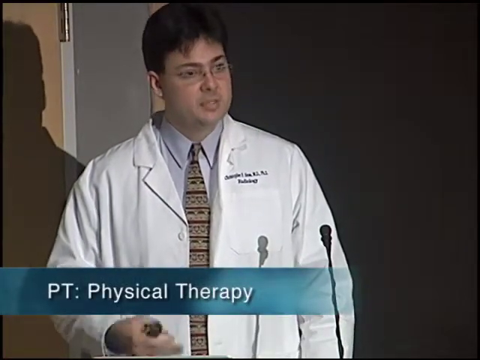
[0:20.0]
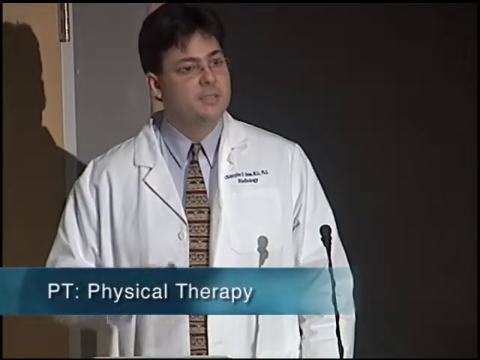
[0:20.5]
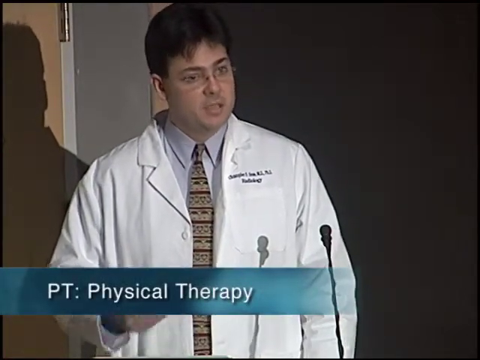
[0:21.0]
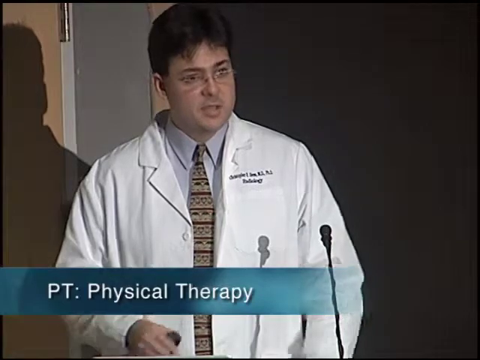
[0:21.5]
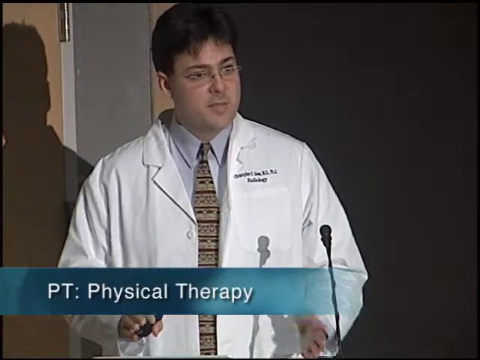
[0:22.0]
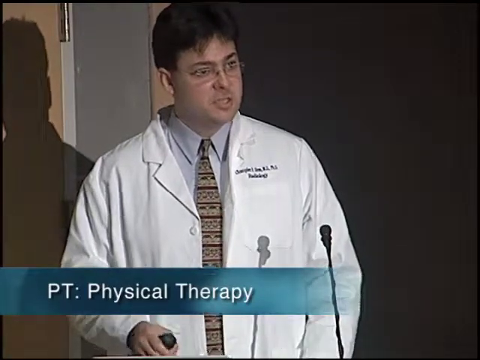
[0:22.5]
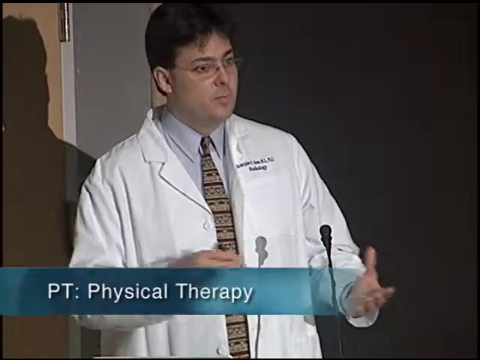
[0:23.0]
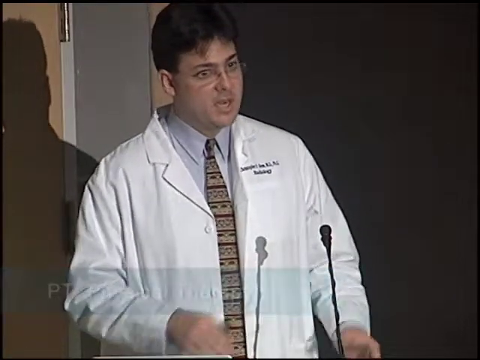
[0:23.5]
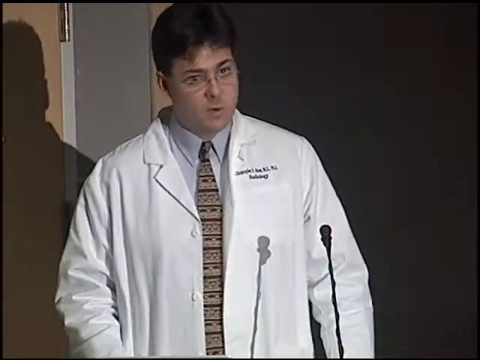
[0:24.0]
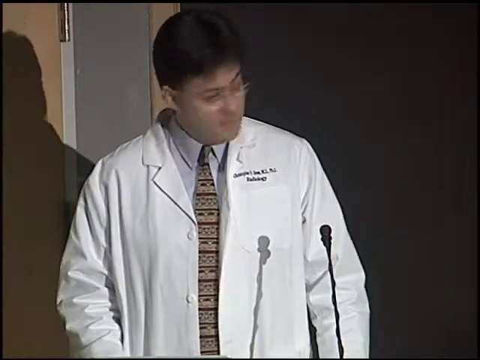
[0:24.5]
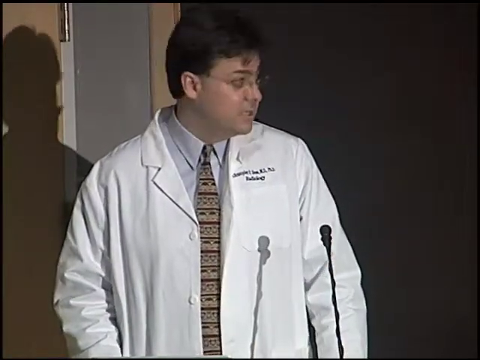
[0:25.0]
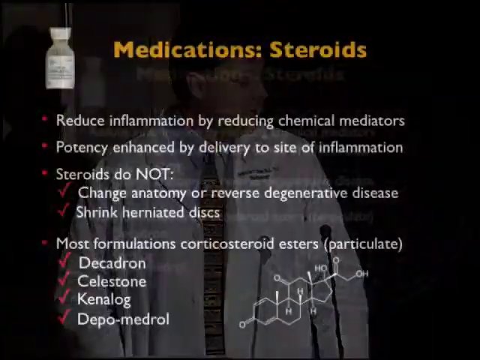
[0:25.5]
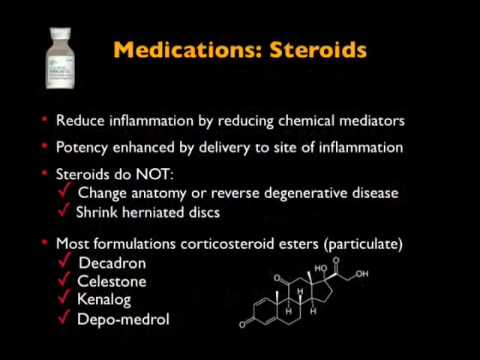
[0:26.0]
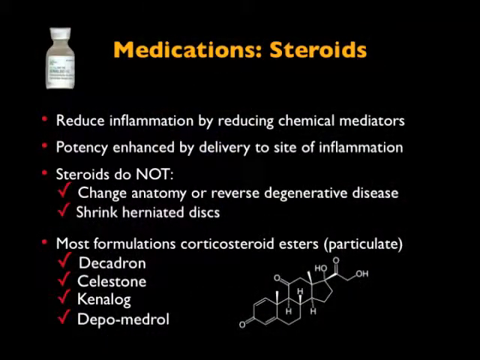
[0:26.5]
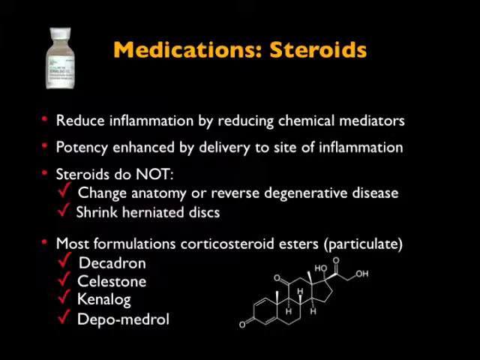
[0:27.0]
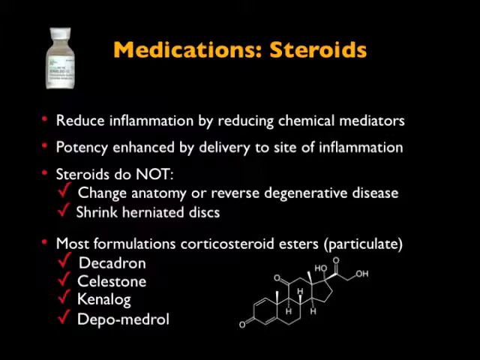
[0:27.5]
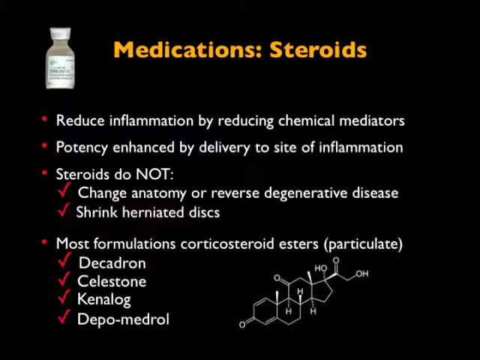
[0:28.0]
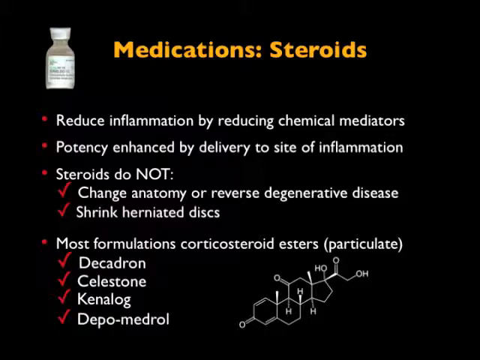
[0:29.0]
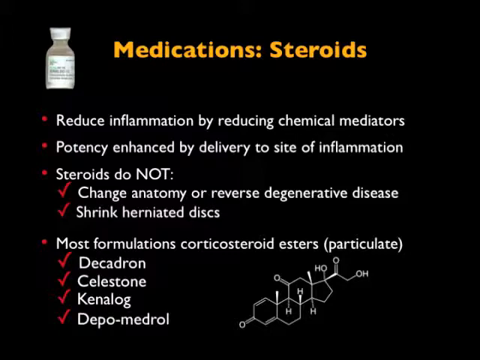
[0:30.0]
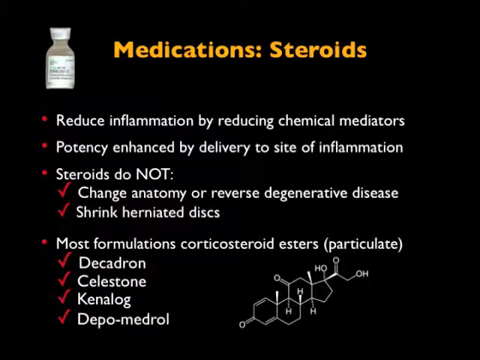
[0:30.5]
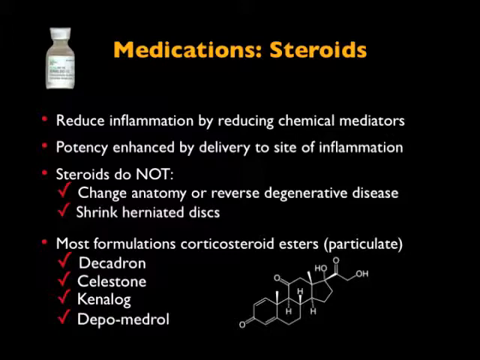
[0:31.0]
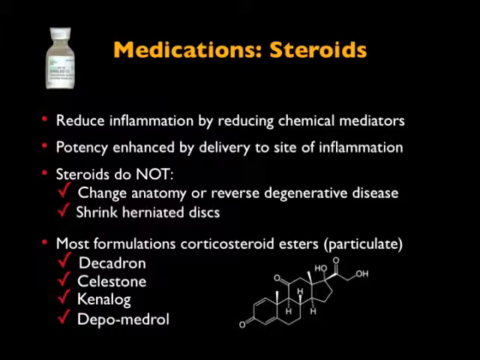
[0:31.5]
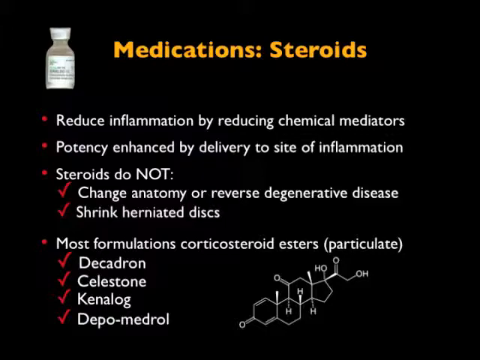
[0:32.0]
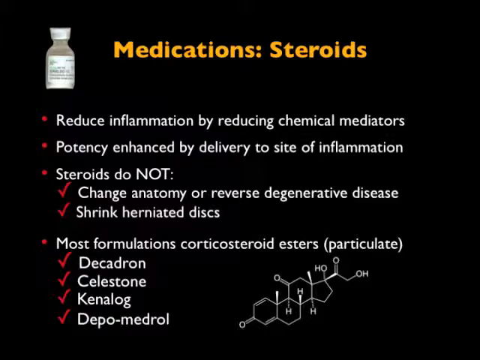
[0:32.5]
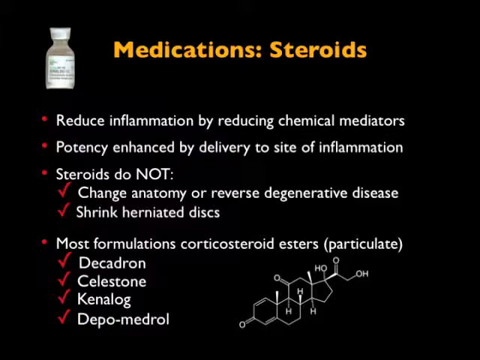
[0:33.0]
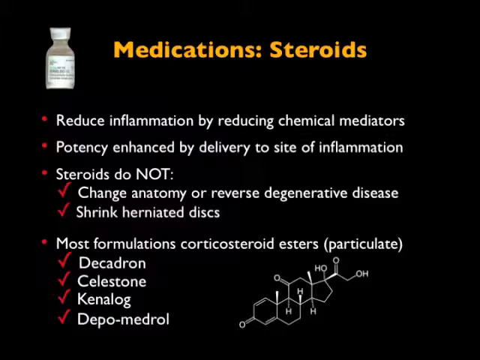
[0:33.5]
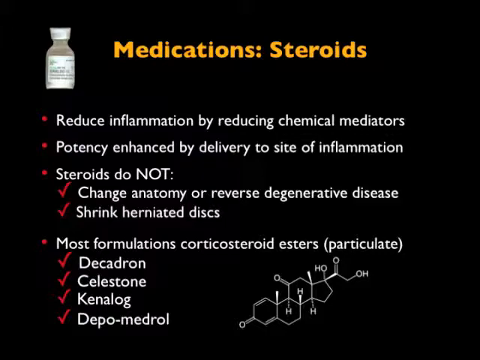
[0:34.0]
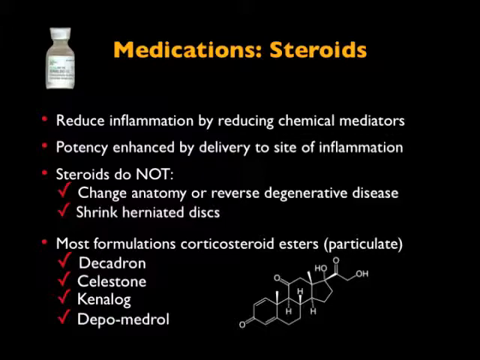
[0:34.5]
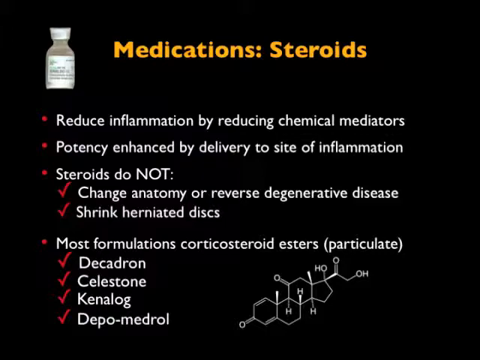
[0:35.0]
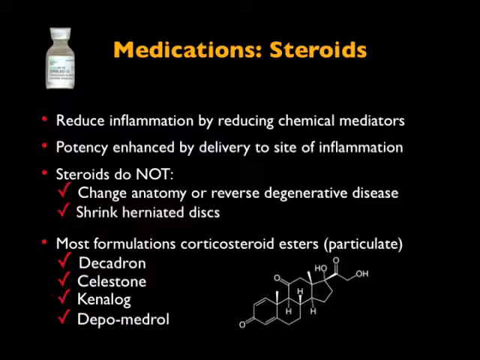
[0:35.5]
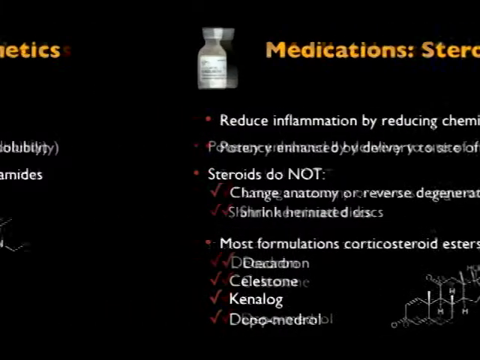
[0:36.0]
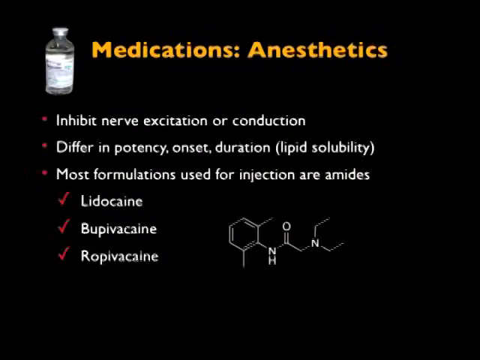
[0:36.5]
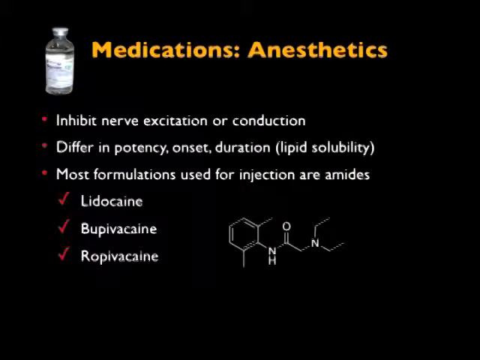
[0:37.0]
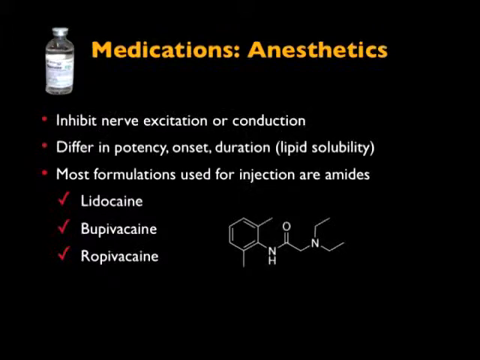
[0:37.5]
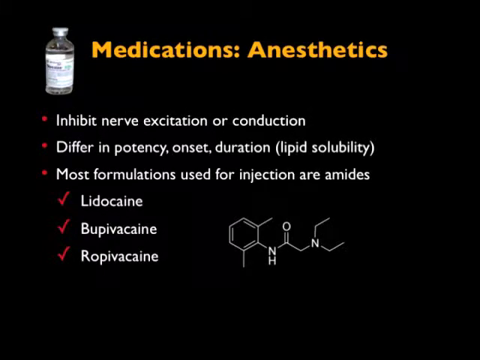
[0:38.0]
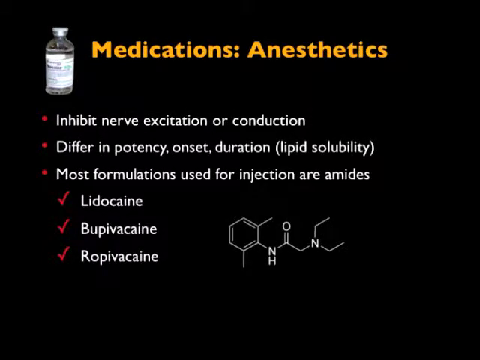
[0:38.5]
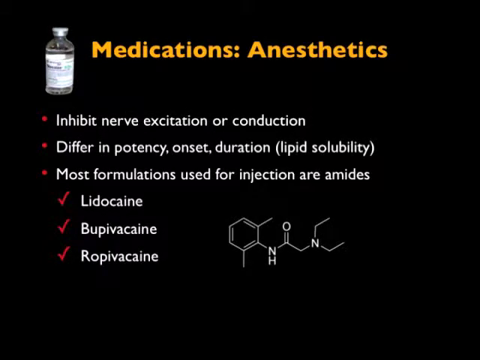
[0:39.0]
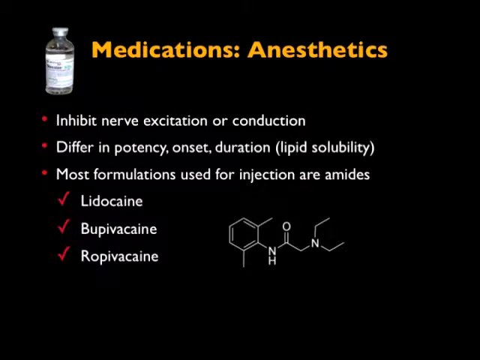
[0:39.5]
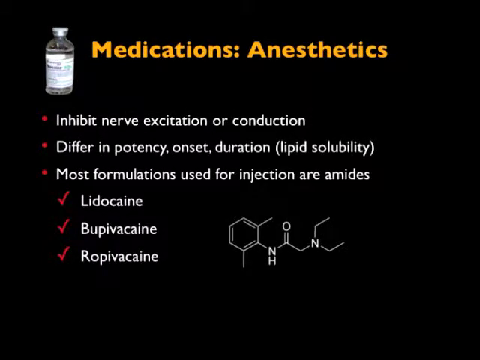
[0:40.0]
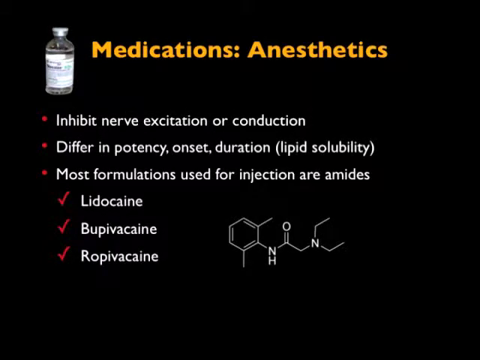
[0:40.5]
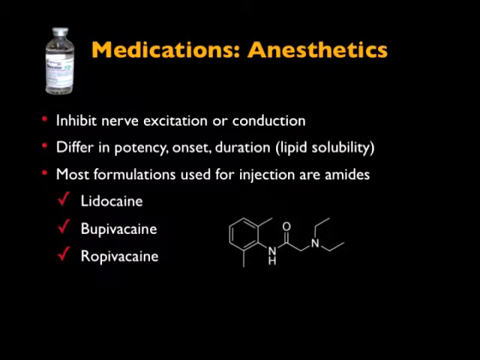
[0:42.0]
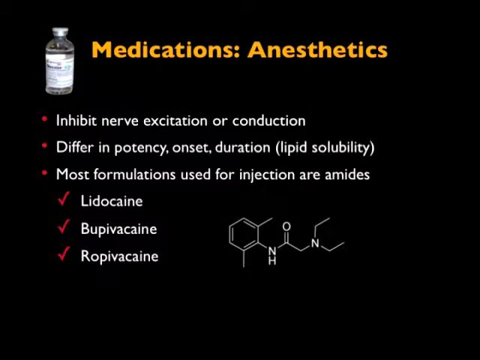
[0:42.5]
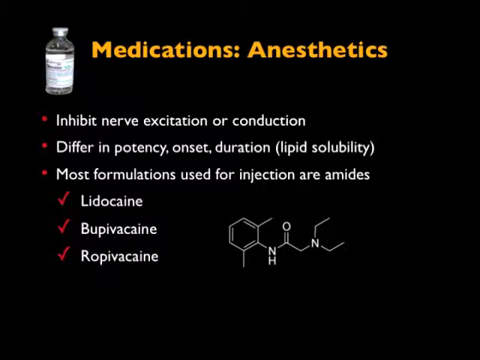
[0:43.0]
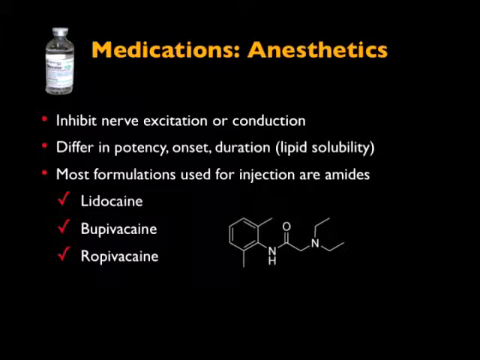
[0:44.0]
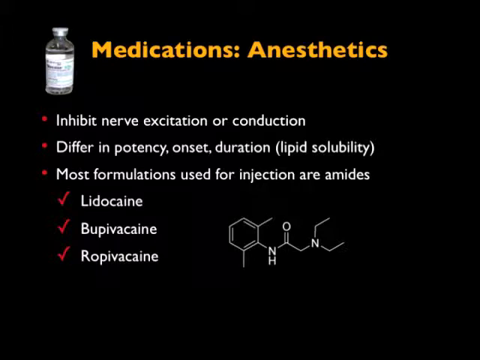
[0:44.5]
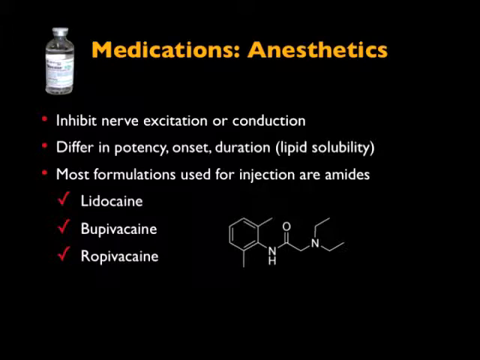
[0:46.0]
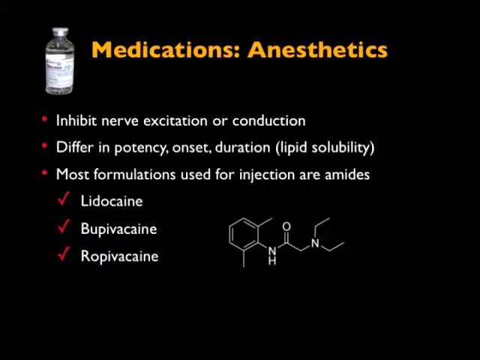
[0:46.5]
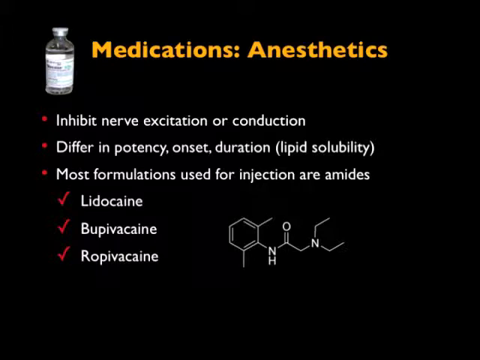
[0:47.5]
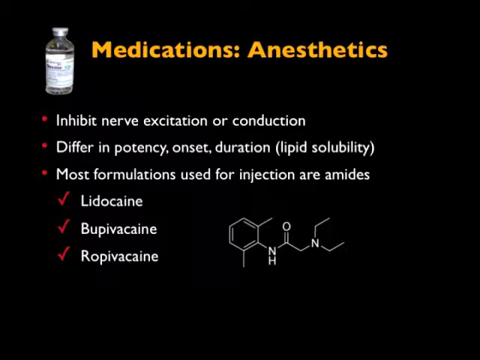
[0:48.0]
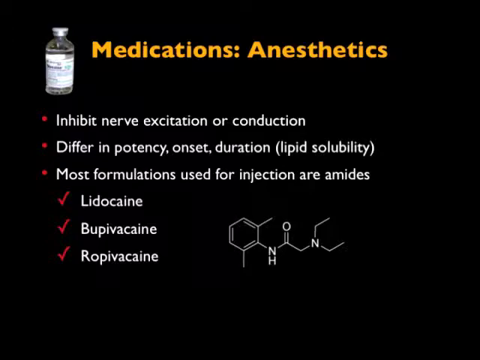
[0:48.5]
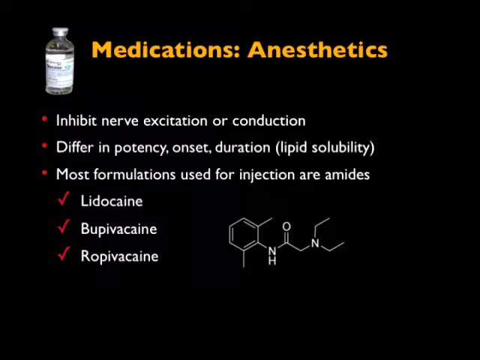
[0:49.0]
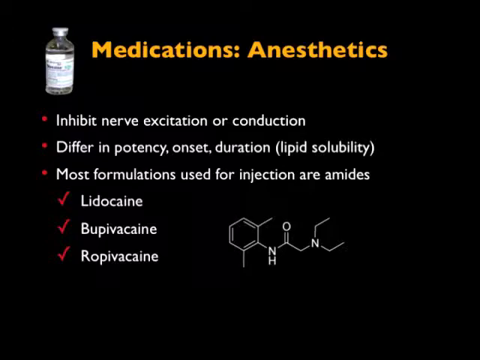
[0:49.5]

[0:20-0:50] The doctor from the first slide is talking. The light is on him, so his shadow shows toward the left-hand side. In the bottom left-hand corner, white text reads "pt.physical therapy." He wears a white medical lab coat with black wording on it, probably his name, along with a brown and beige tie and glasses. There is a mic, and in his right hand is something that looks like it may be a button for the projector. He turns to the right side, and a slide appears with "medication steroids" in yellow. In white it reads "reduce inflammation by reducing chemical mediators," "potency enhanced by delivery to site of inflammation," "steroids do not change anatomy or reverse degenerative disease," "shrink herniated disc," "most formulations," "corticosteroid esters," "(particulate)," "decadrone," "Celestone" and "Kenalog." Another slide then reads "medication anesthetics," "inhibit nerve excitation in conduction," and "differ in potency onset duration."